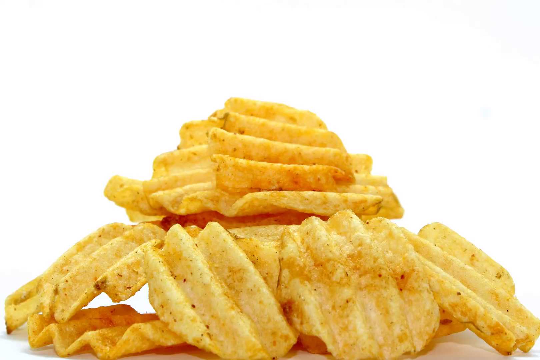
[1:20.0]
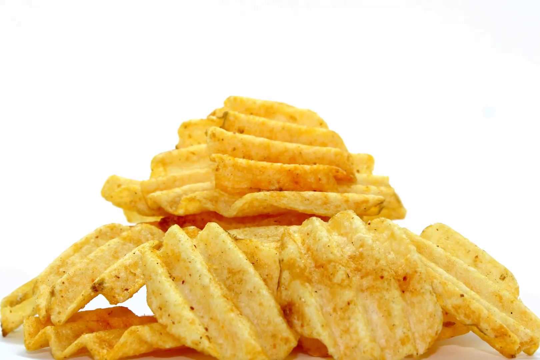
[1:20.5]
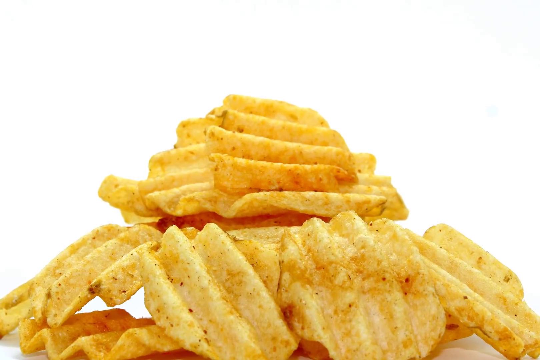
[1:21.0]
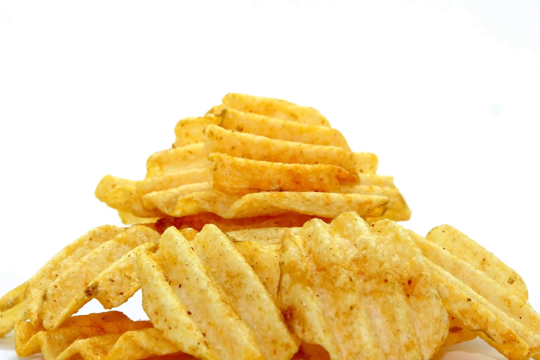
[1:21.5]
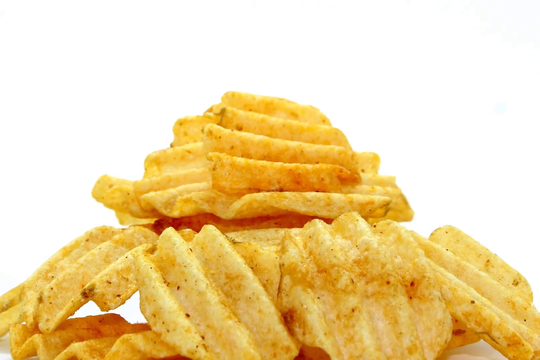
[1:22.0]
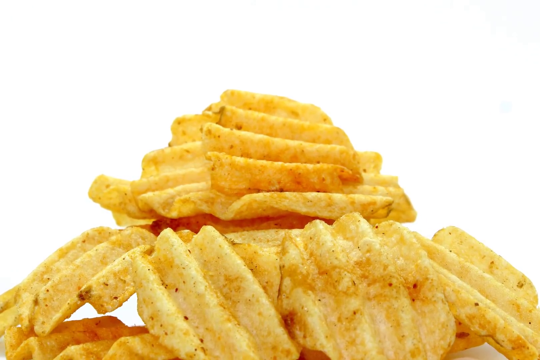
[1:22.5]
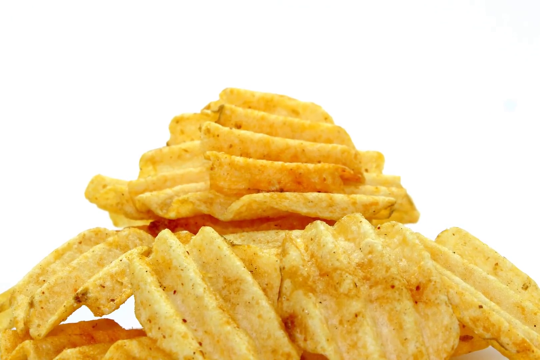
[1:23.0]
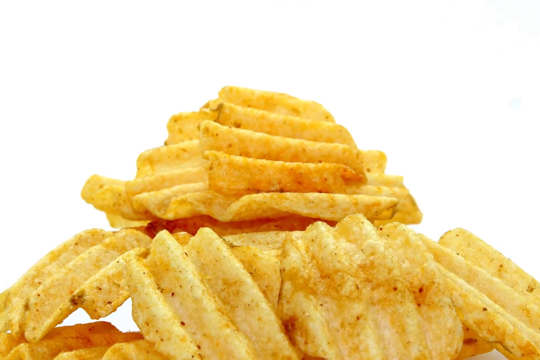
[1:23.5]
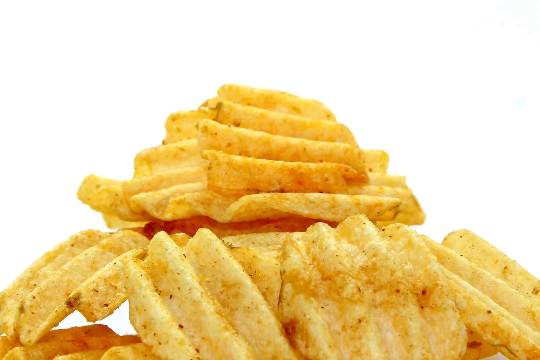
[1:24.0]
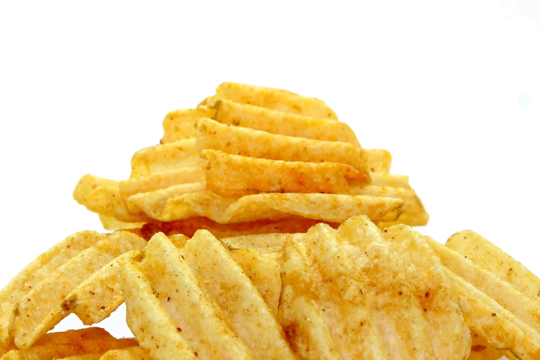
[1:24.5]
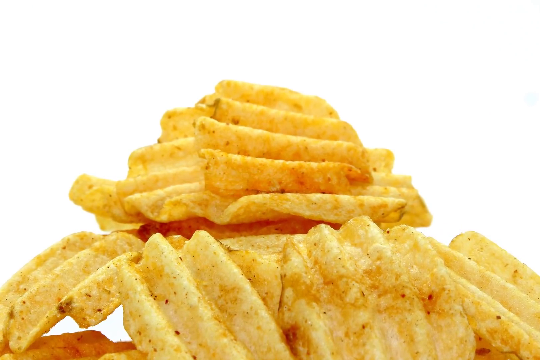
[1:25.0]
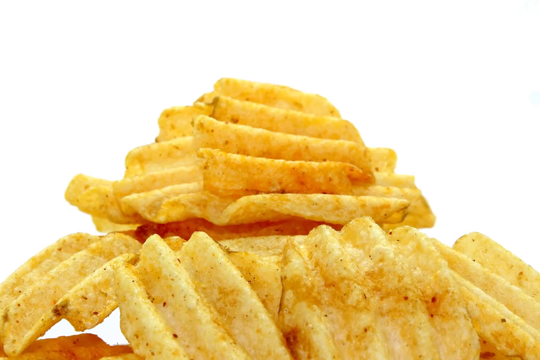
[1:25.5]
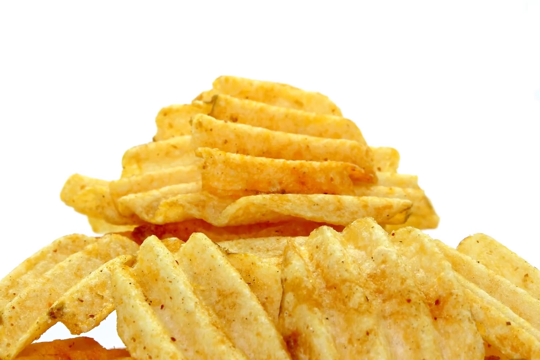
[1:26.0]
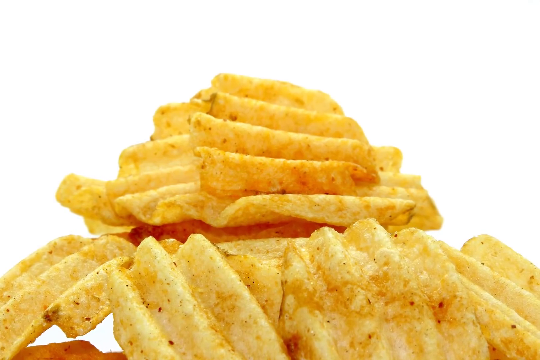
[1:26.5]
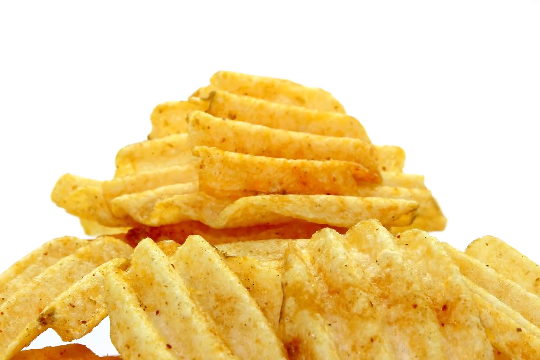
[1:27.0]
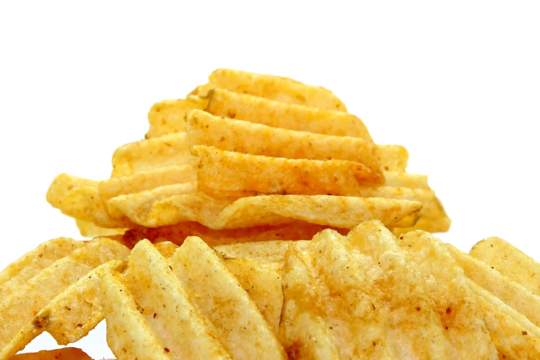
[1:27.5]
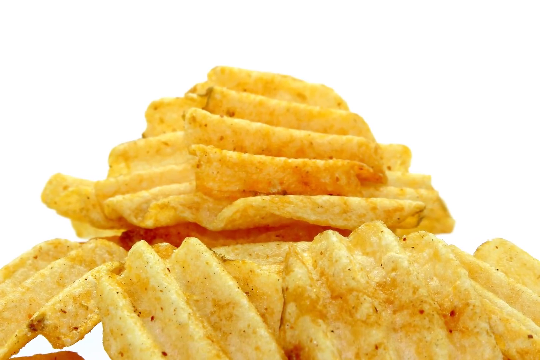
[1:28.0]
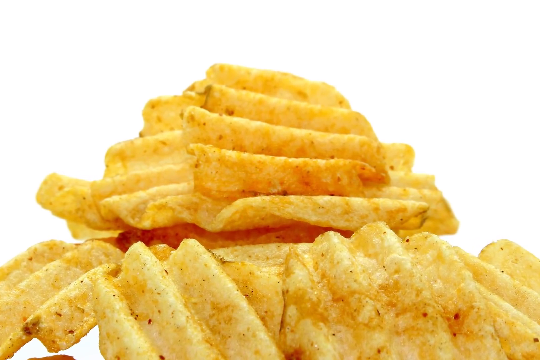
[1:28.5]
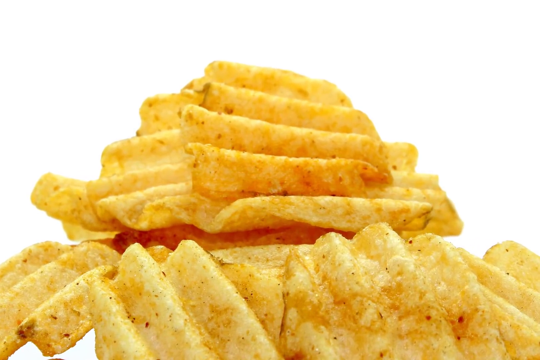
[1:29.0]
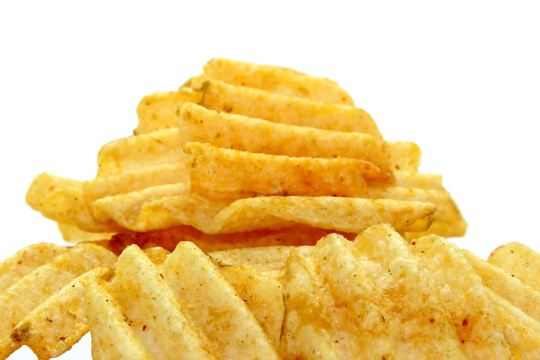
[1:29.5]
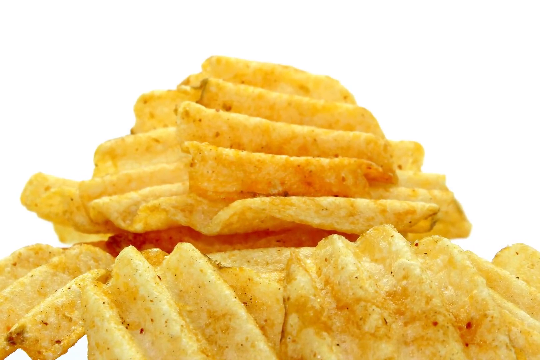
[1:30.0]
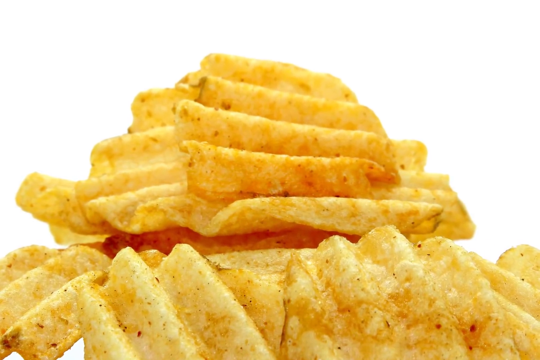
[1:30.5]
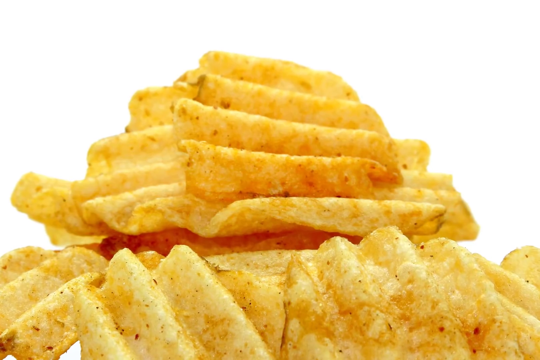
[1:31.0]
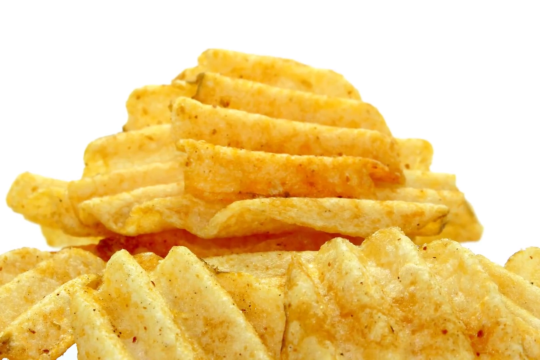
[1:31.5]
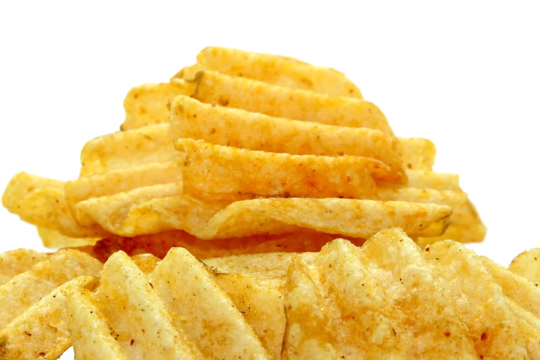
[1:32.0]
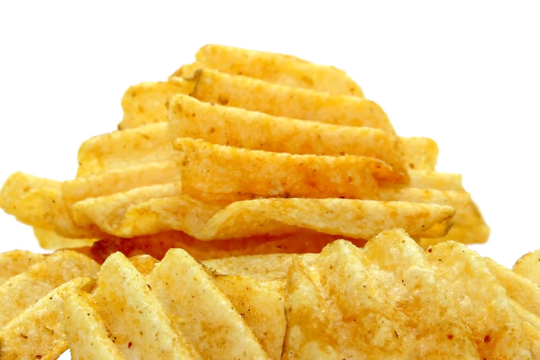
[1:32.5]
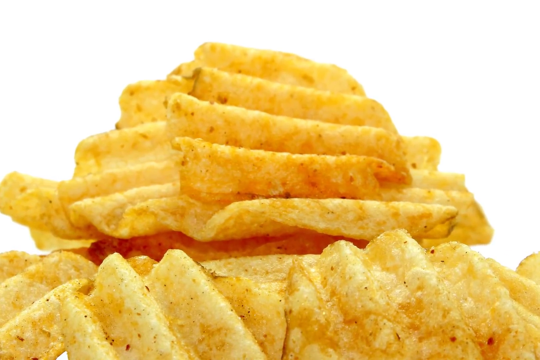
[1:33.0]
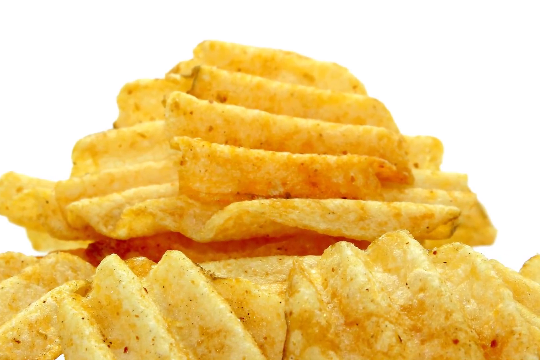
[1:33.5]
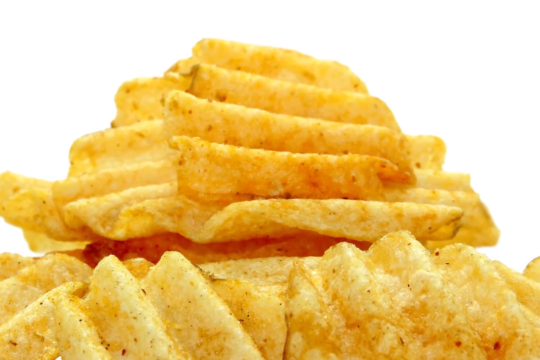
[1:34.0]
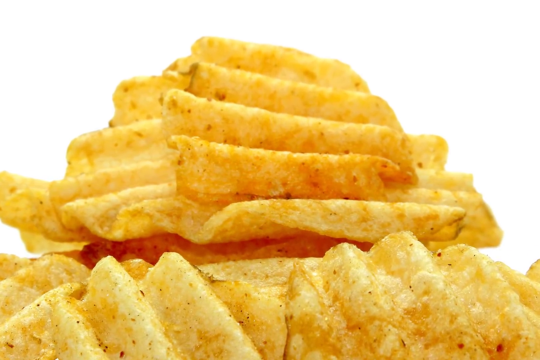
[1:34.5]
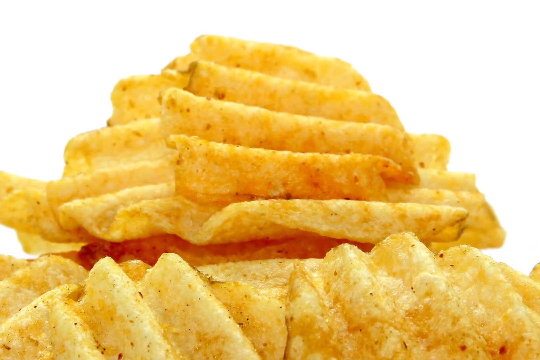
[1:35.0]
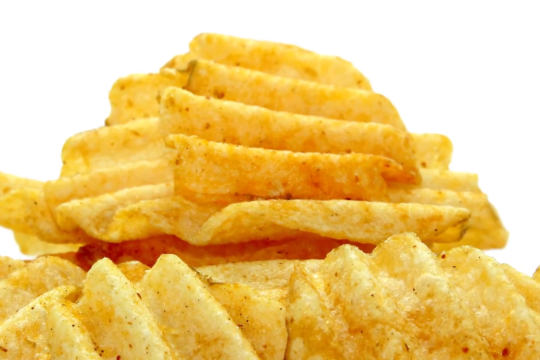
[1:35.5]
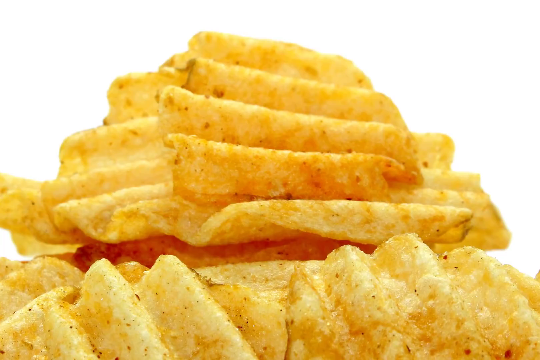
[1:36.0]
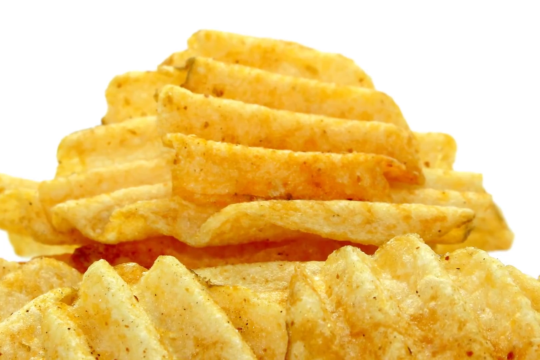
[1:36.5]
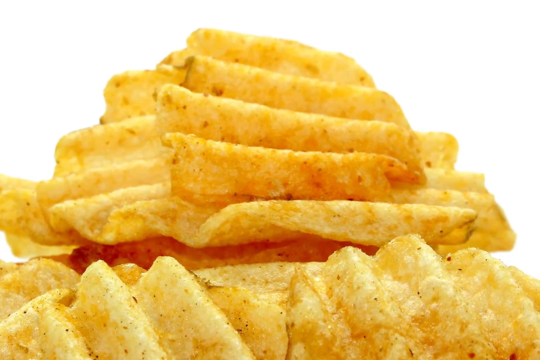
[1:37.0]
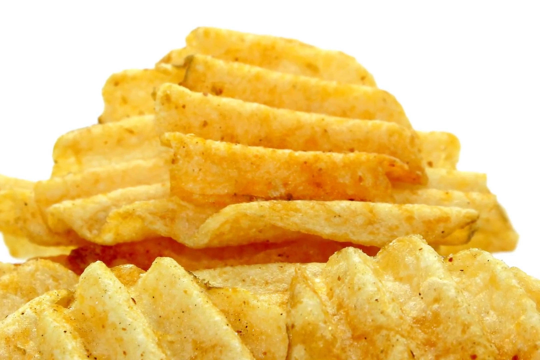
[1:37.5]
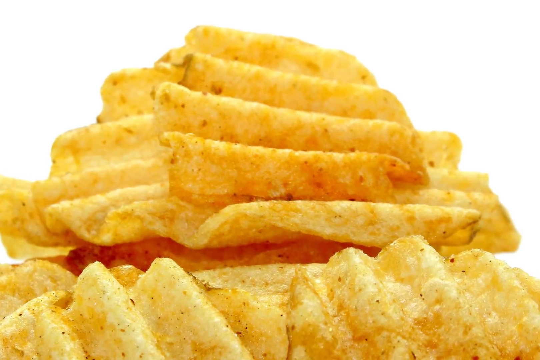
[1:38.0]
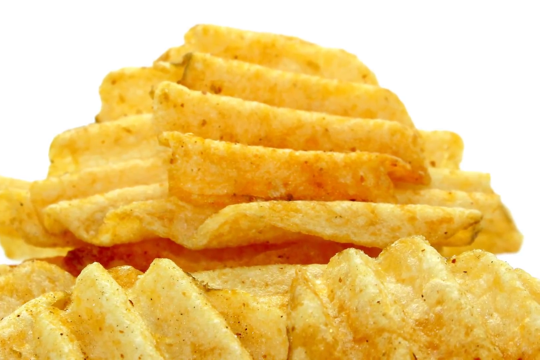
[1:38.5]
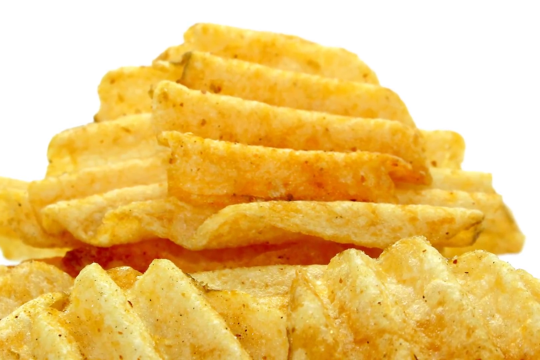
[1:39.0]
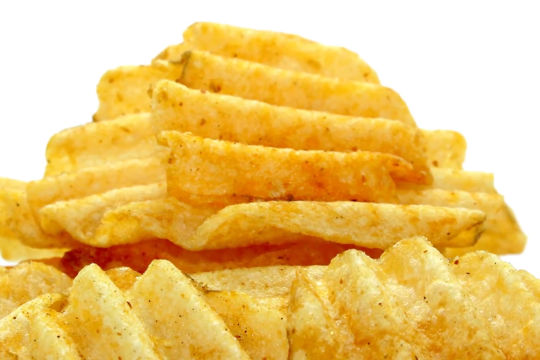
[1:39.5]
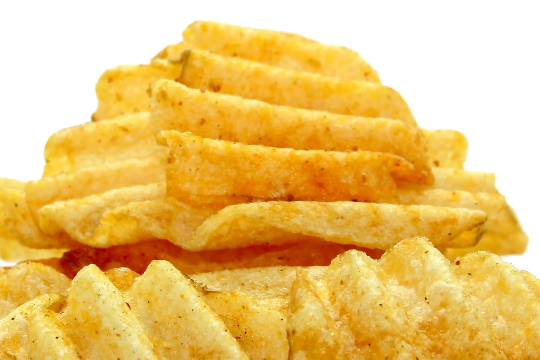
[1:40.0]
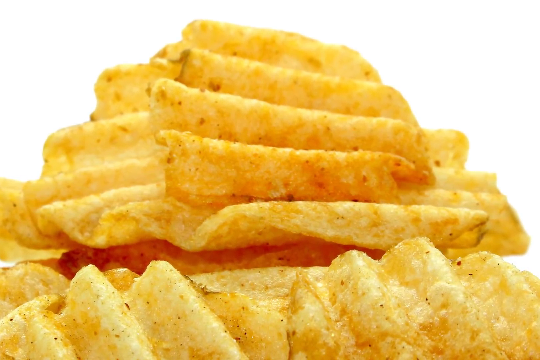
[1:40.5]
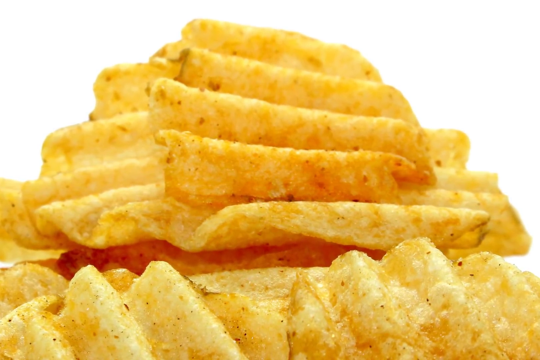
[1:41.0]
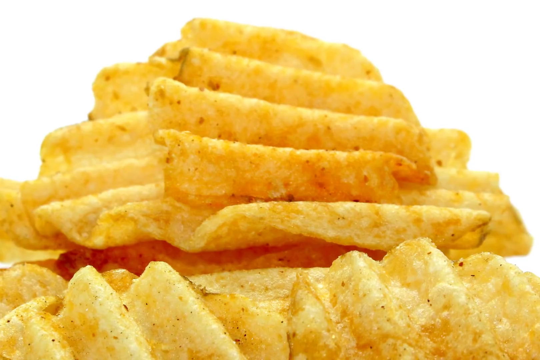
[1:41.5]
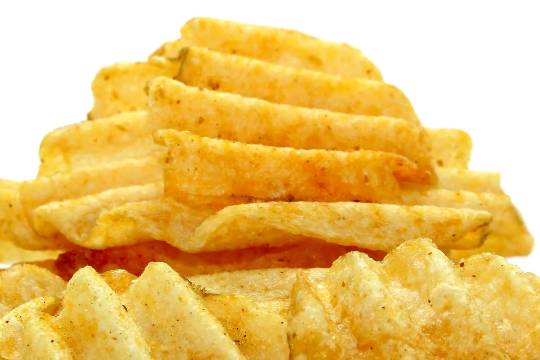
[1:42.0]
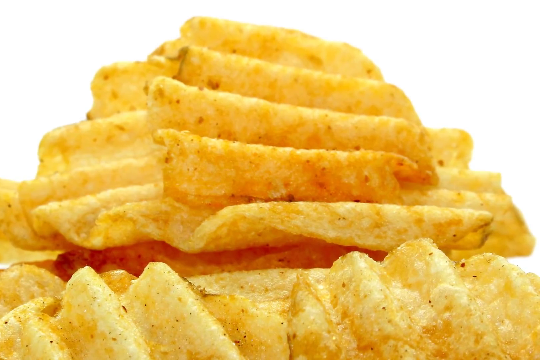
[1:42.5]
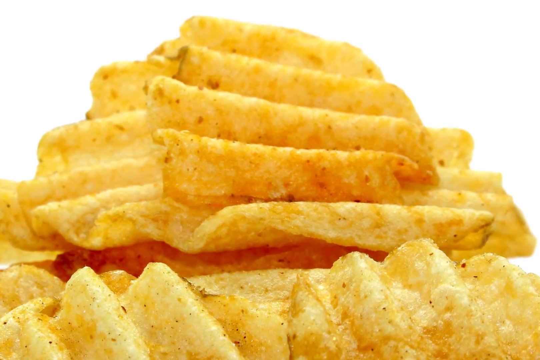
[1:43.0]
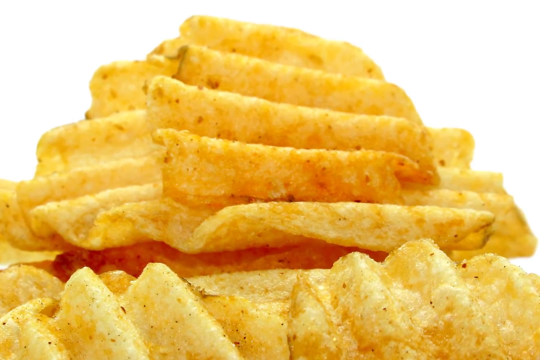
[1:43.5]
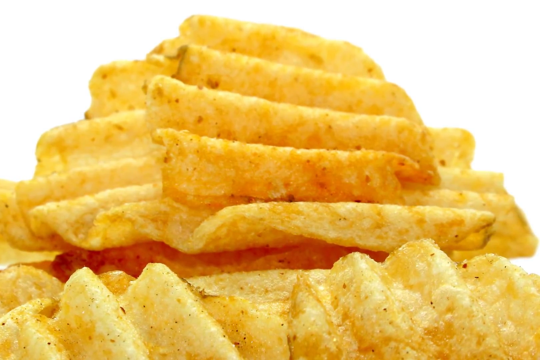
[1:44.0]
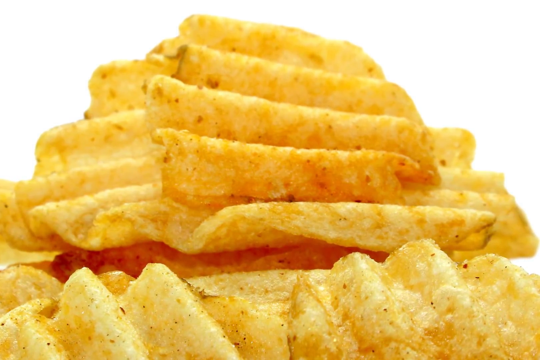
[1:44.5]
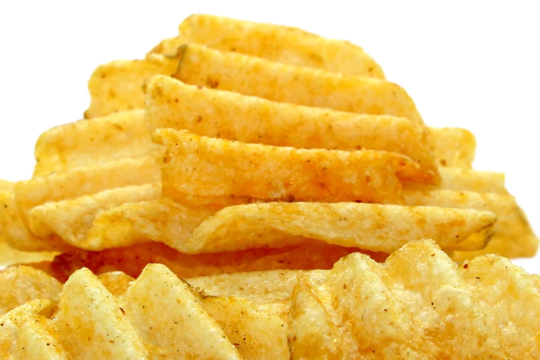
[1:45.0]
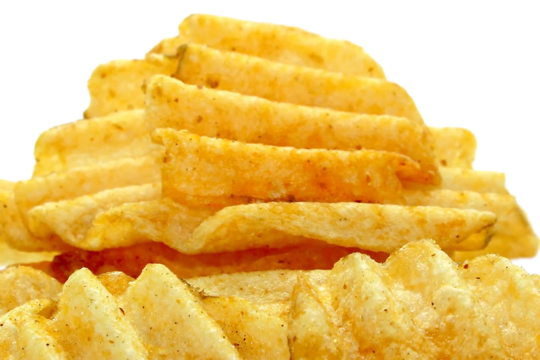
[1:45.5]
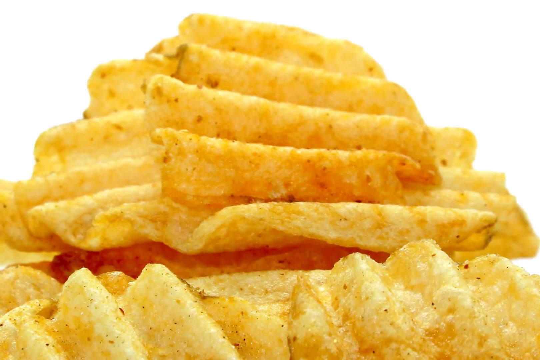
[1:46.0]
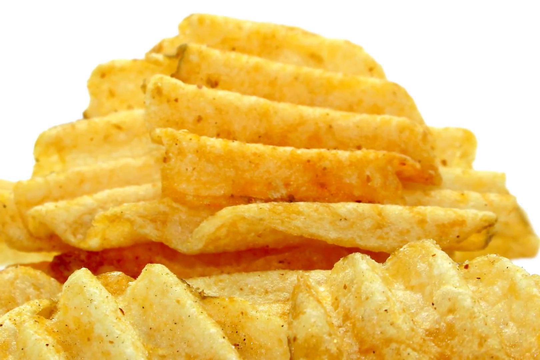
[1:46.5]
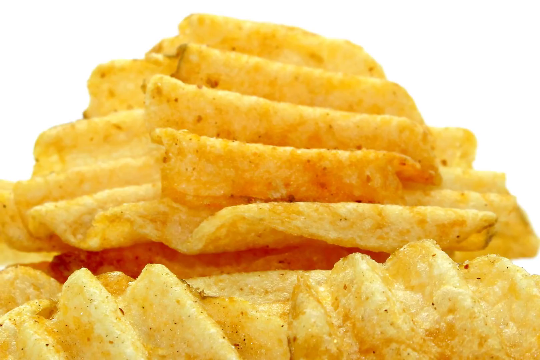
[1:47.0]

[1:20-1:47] Potato chips with spice and a little salt are shown, along with a bagel filled with tomato, ham, cheese, mozzarella and chicken that looks juicy.